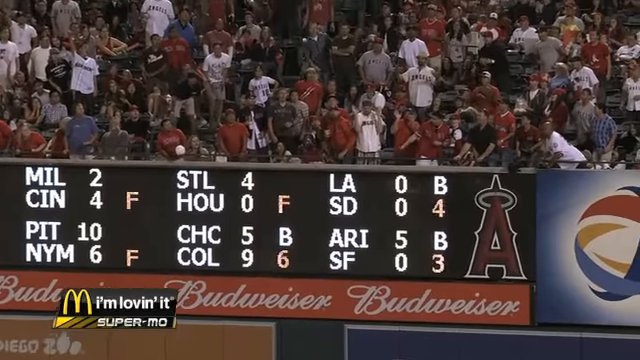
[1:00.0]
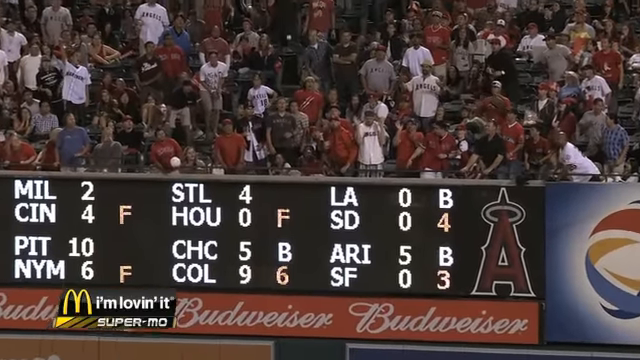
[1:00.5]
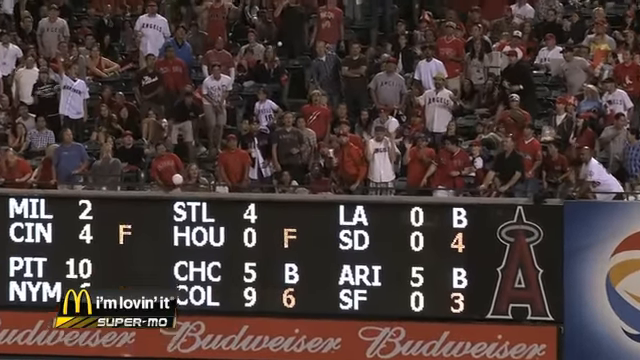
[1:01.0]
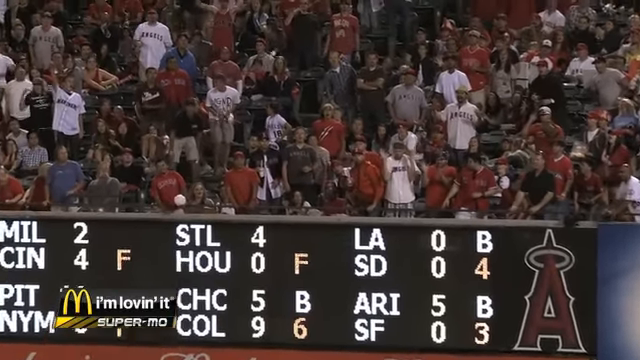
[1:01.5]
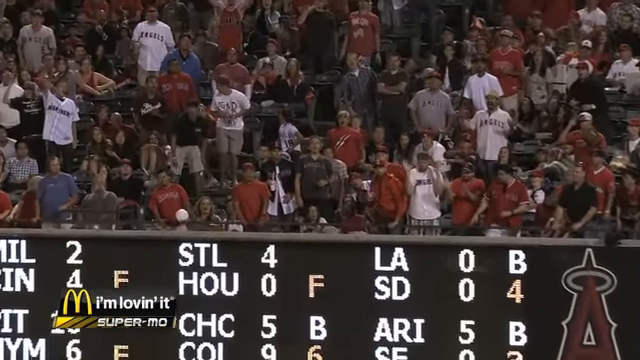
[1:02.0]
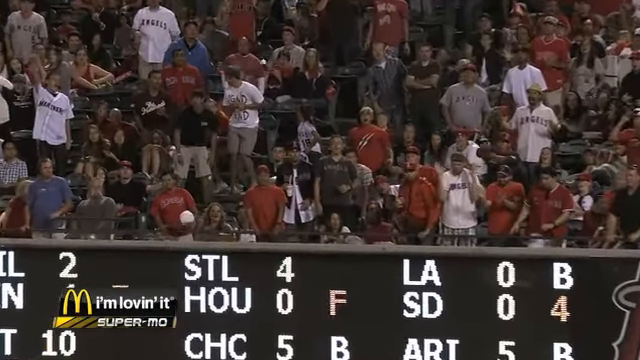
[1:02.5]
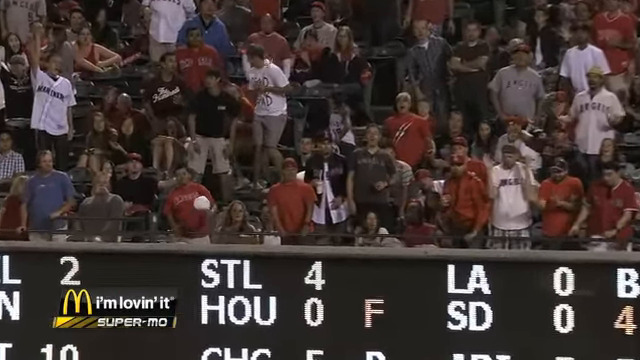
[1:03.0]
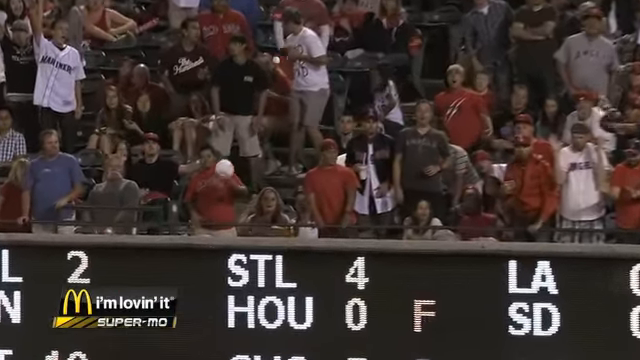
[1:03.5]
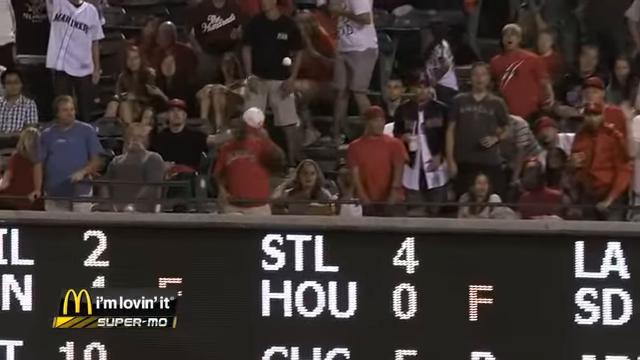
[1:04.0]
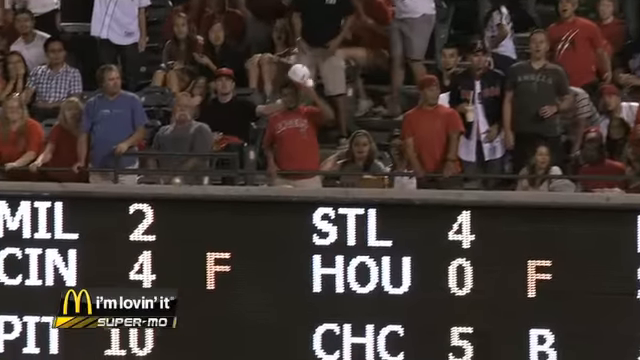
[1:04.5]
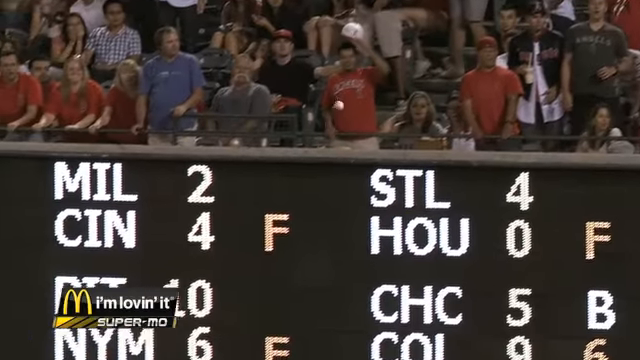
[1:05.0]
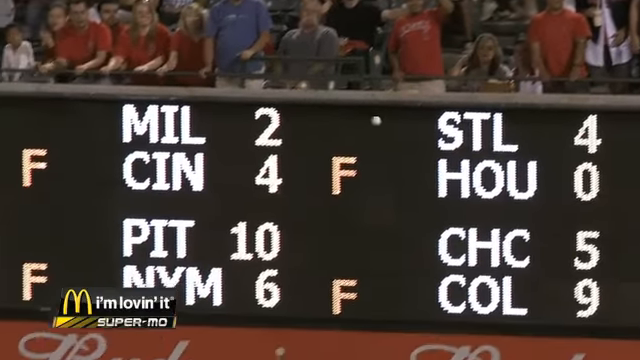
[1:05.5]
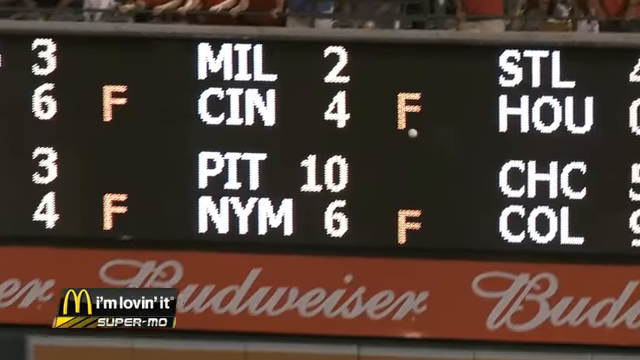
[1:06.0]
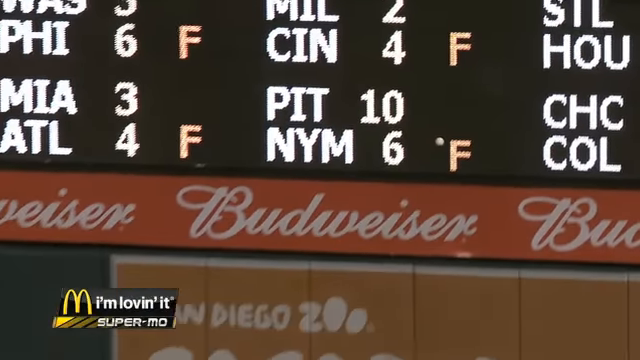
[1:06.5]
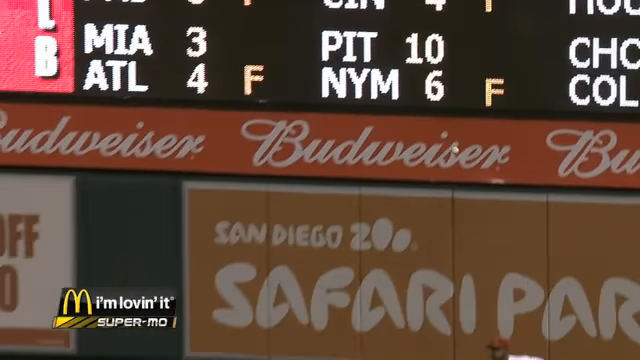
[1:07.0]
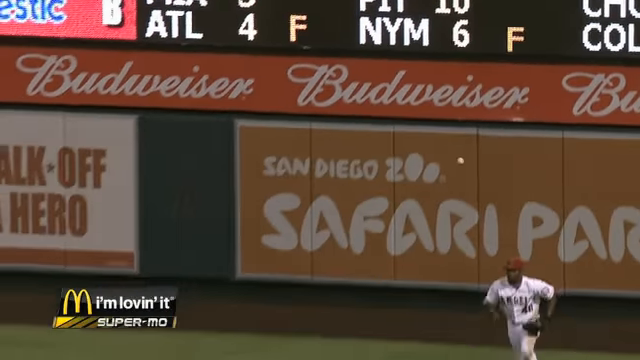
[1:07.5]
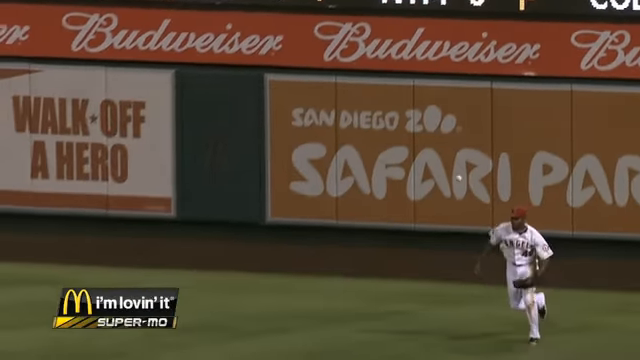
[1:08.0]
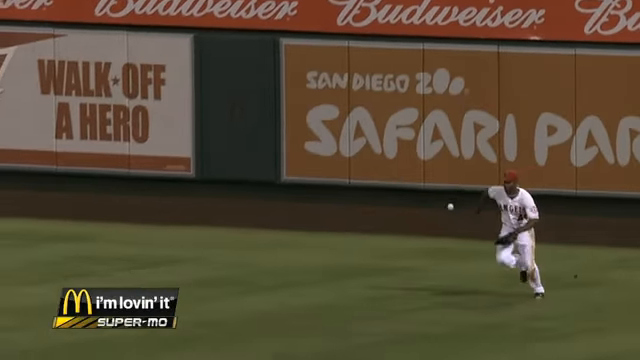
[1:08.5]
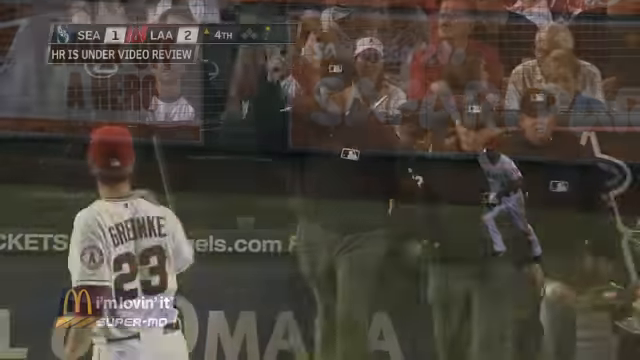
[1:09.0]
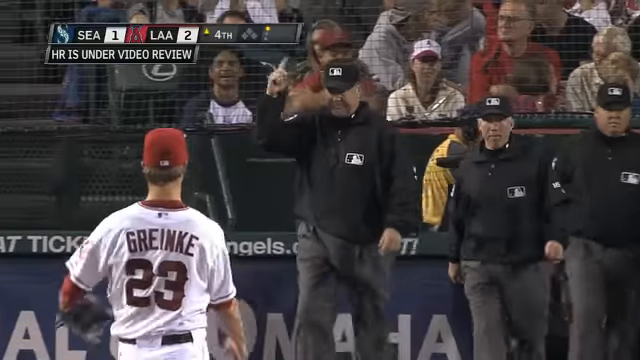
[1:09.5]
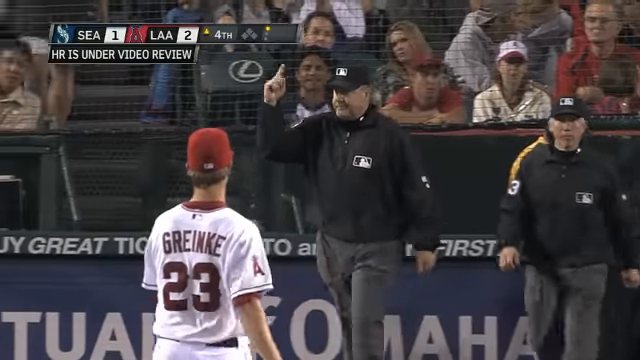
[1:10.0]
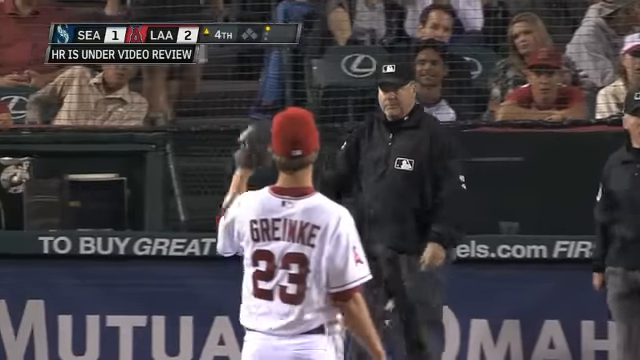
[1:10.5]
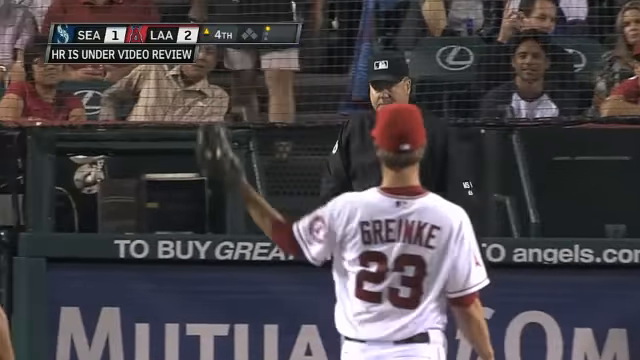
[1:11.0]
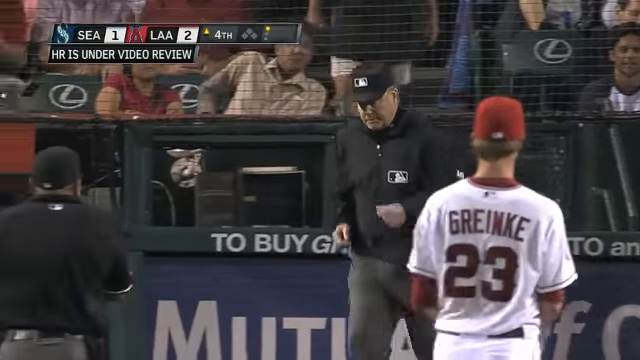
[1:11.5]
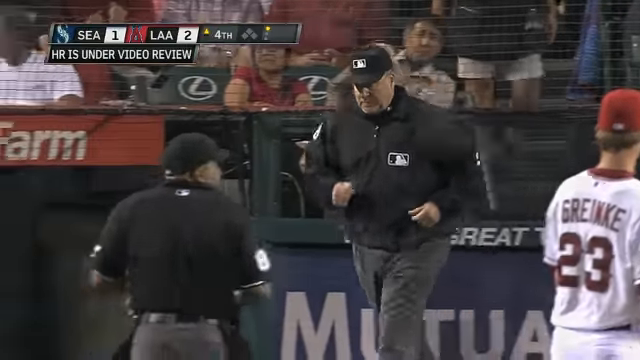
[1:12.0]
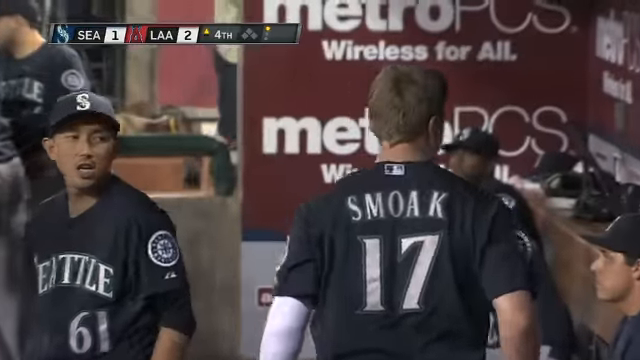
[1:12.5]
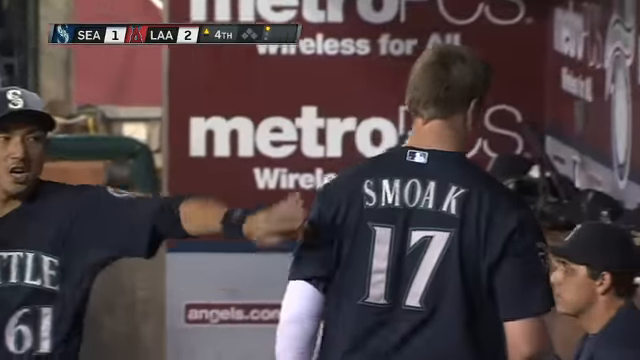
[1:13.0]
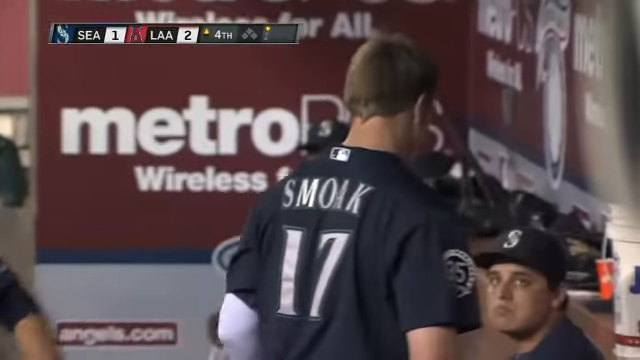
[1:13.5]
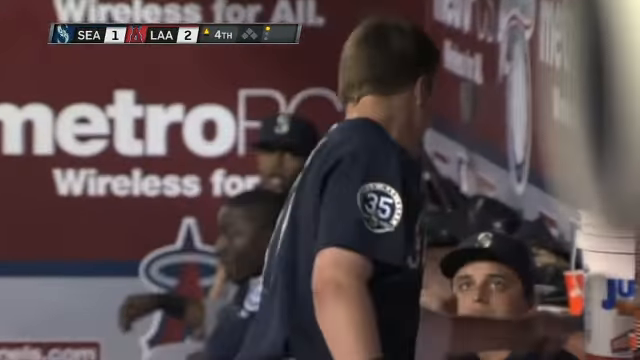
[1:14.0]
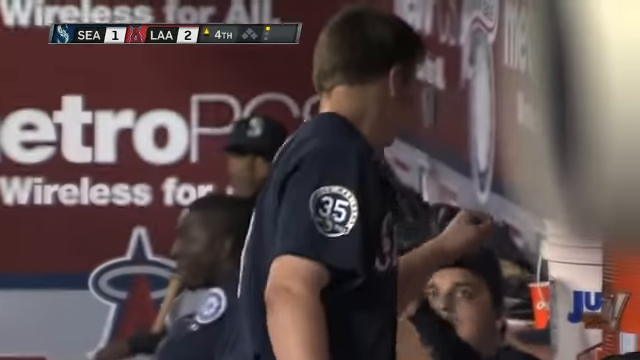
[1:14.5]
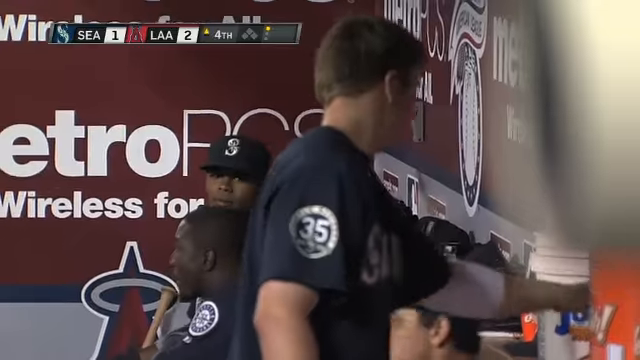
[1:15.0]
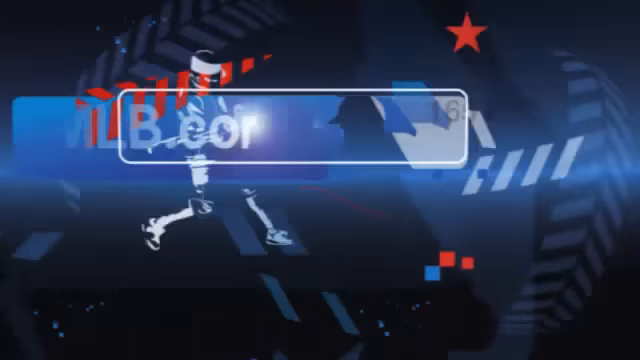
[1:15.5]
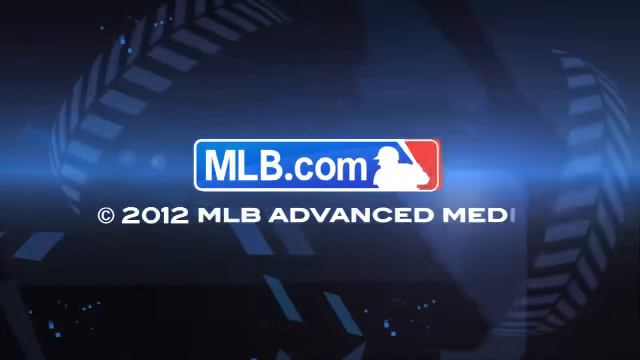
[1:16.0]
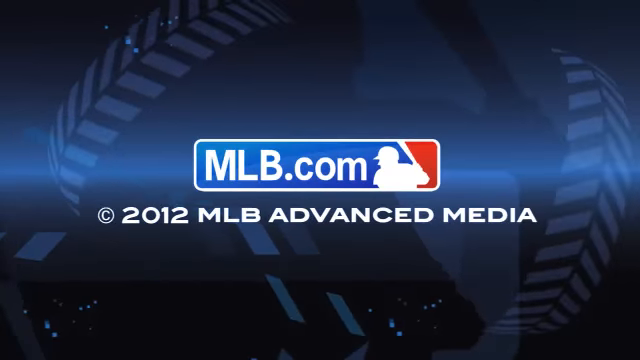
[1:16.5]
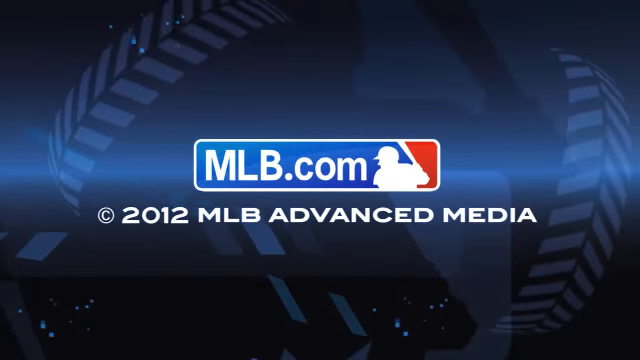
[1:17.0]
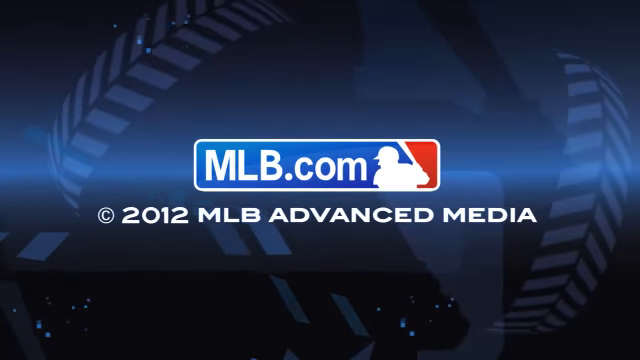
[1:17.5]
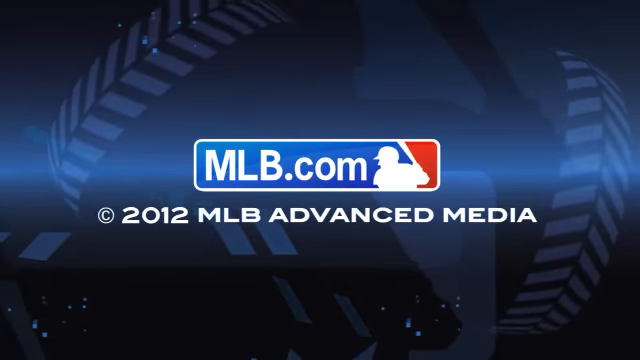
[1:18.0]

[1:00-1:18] A slow-motion replay shows the ball hitting the top of the wall, bouncing up, and slowly coming down to the right field area, where it hits the ground. The umpires, apparently having looked at a replay, have just come out of the dugout area. One umpire has his finger pointed in the air and twirls it again, confirming the home run. The pitcher, close to the camera, catches the ball coming back out to him. In the dugout, the batter who hit the home run is patted on the back by somebody and gives pounds to some people. The video then cuts to a graphic with a navy blue background that reads "MLB.com" in the center with the logo to the right, and underneath, "2012 MLB Advanced Media".